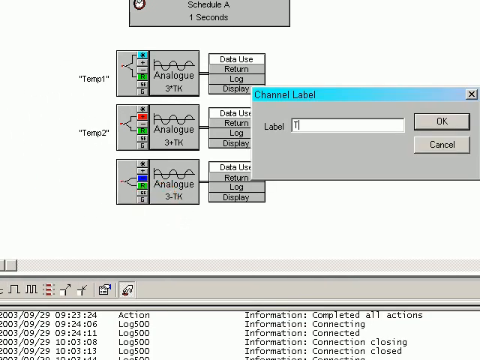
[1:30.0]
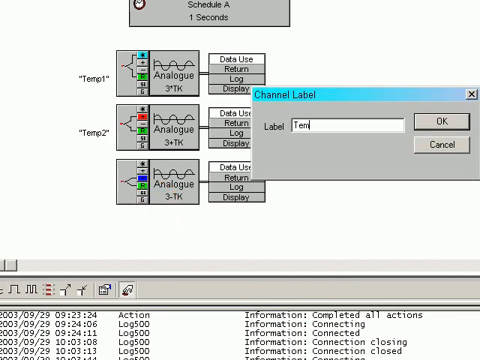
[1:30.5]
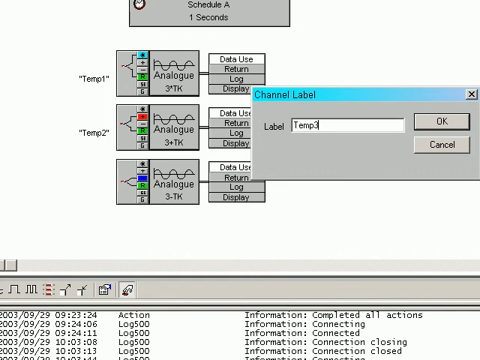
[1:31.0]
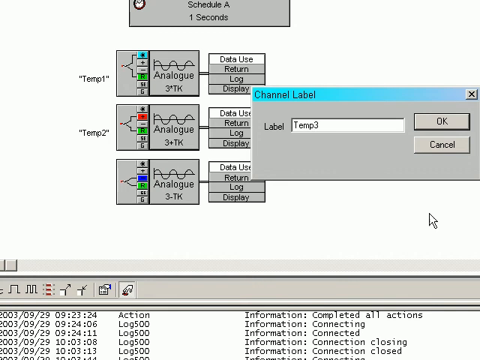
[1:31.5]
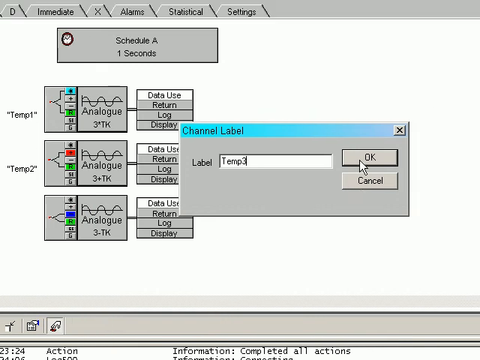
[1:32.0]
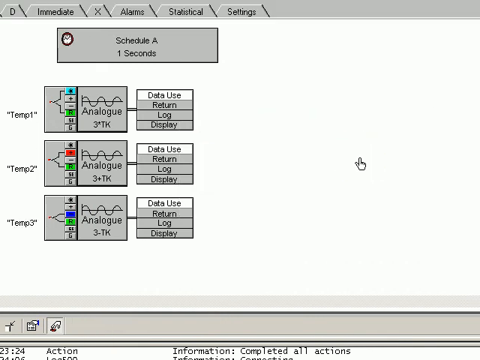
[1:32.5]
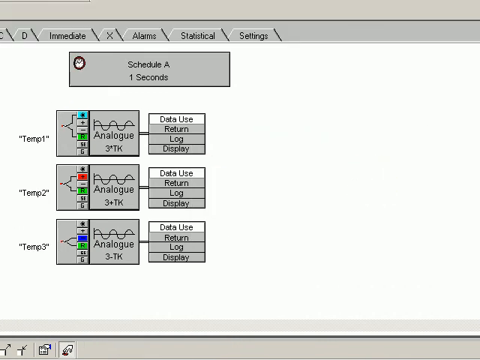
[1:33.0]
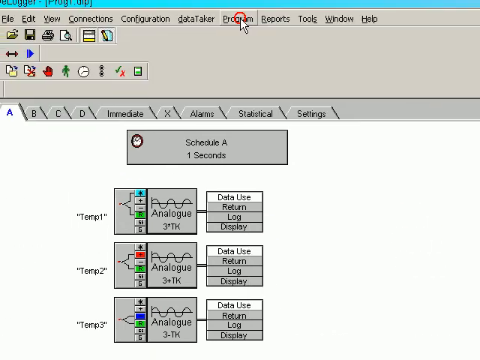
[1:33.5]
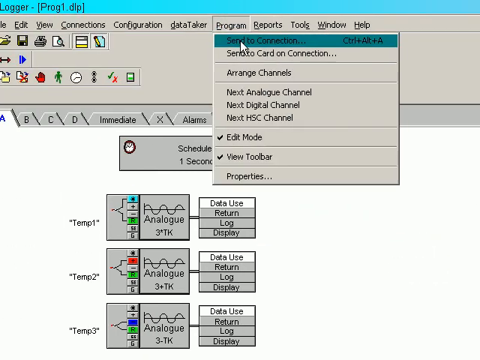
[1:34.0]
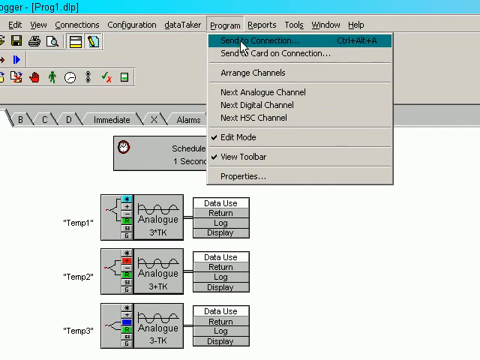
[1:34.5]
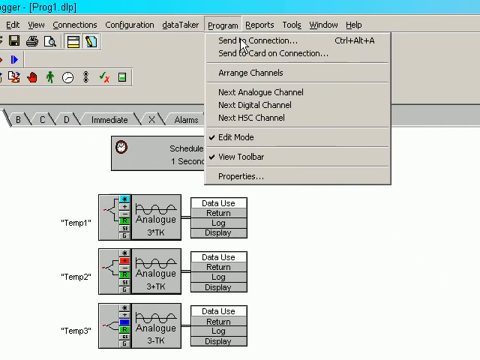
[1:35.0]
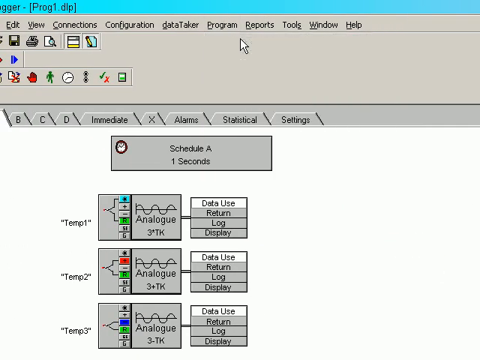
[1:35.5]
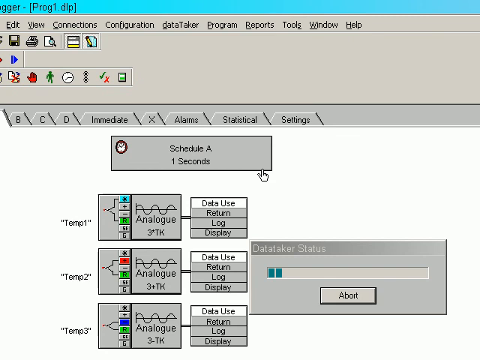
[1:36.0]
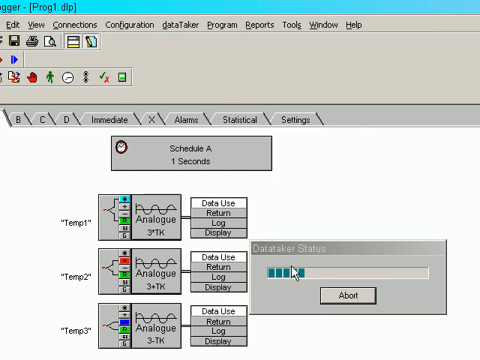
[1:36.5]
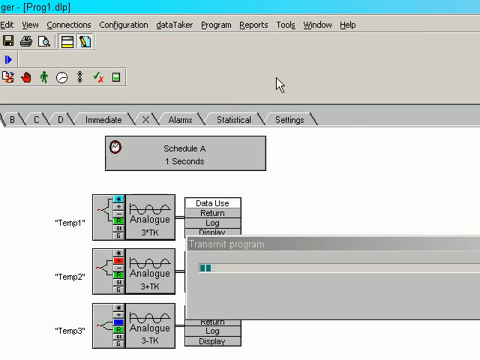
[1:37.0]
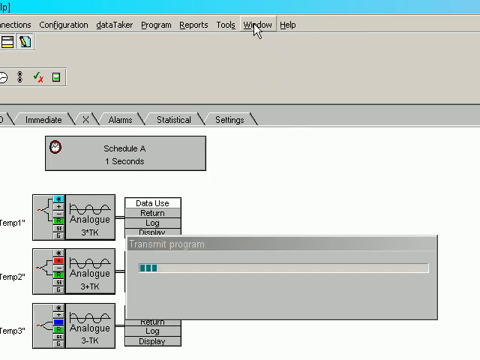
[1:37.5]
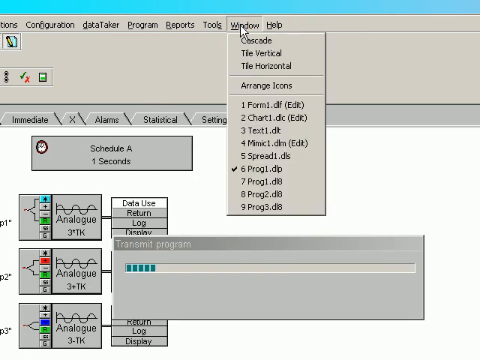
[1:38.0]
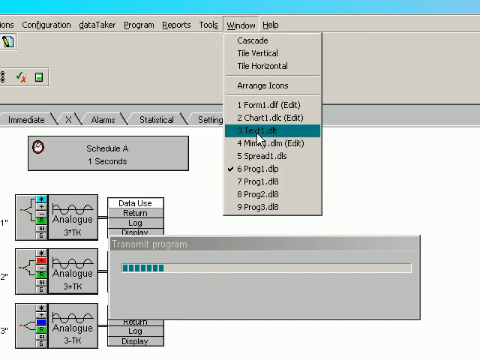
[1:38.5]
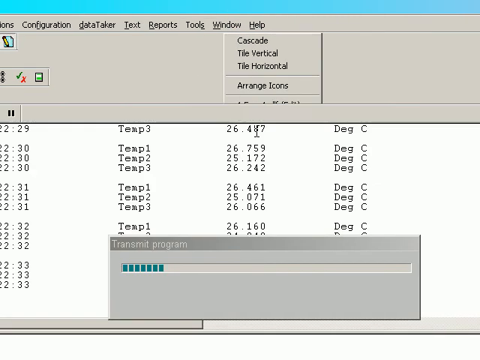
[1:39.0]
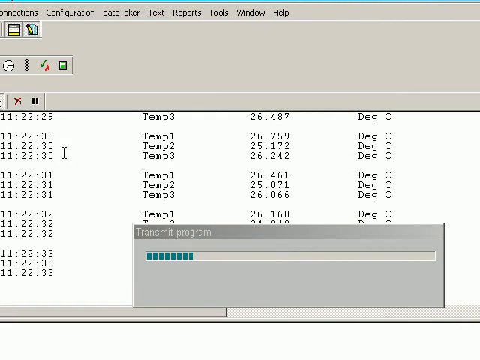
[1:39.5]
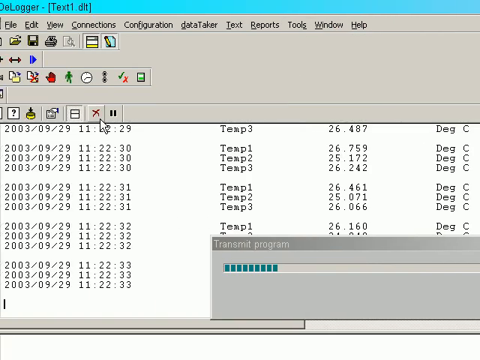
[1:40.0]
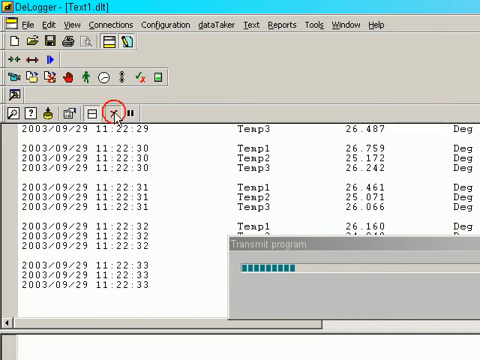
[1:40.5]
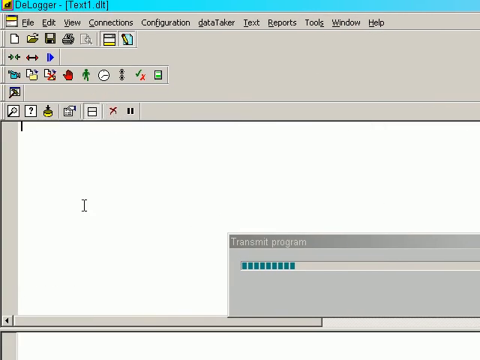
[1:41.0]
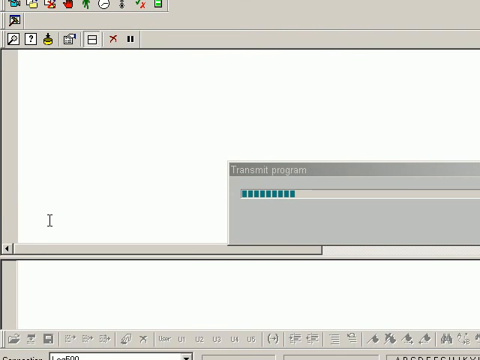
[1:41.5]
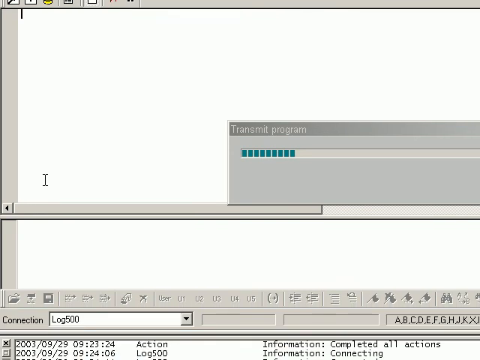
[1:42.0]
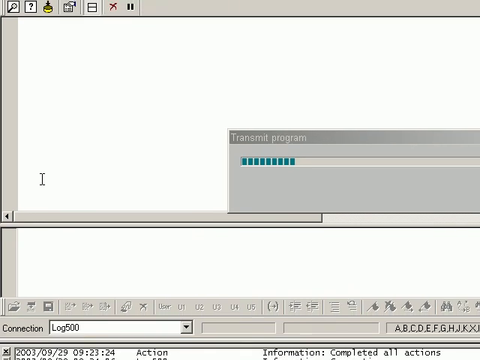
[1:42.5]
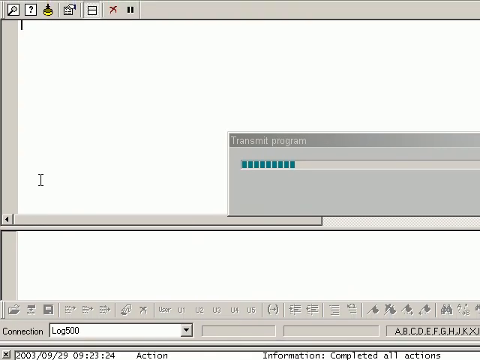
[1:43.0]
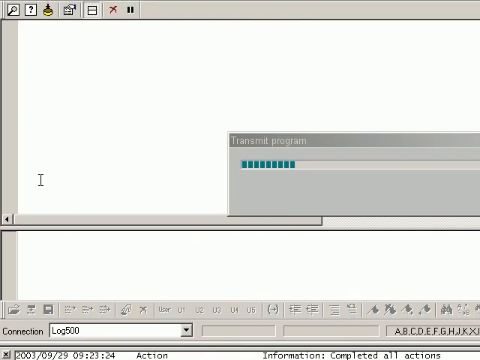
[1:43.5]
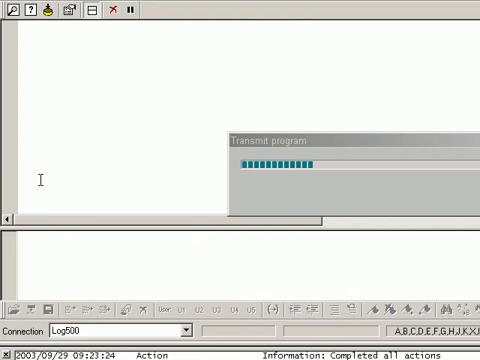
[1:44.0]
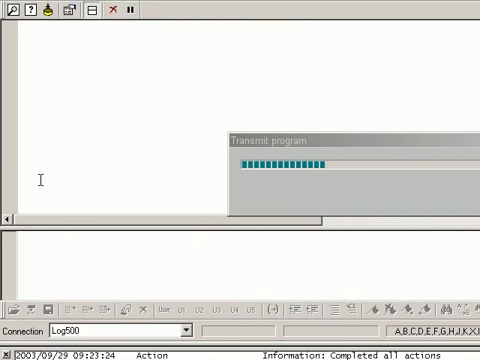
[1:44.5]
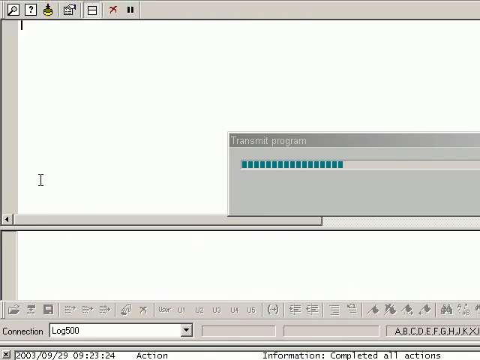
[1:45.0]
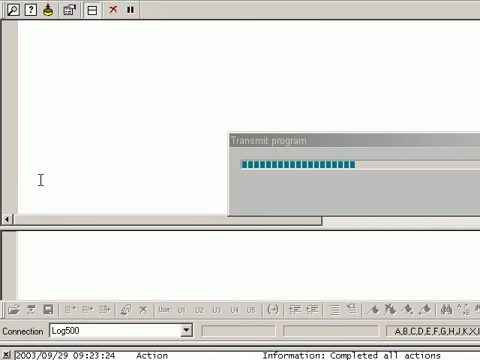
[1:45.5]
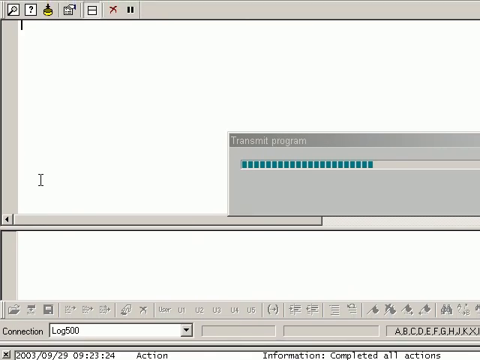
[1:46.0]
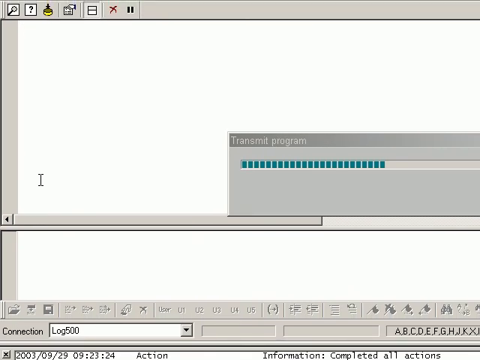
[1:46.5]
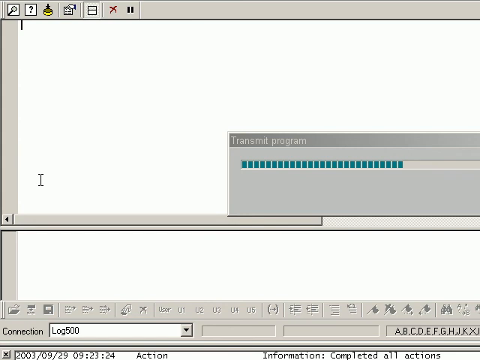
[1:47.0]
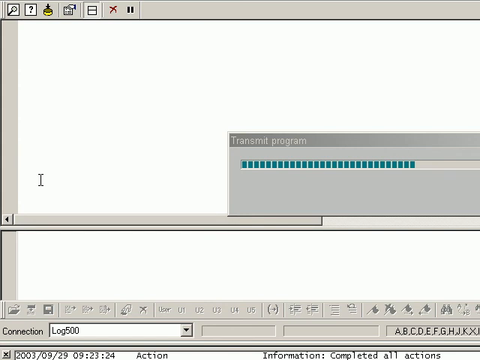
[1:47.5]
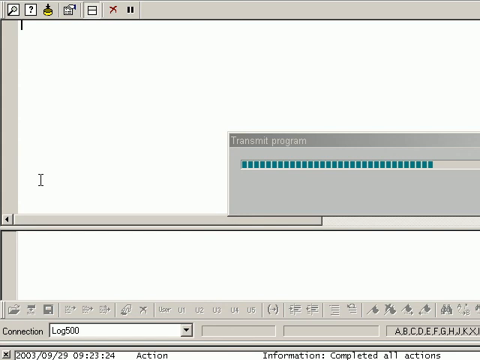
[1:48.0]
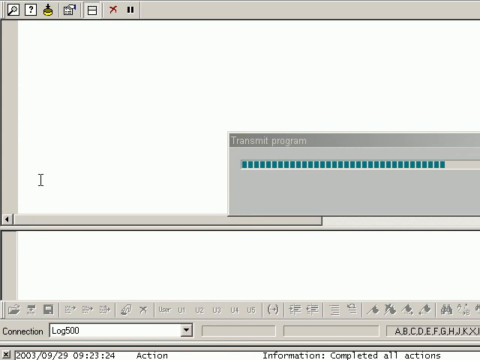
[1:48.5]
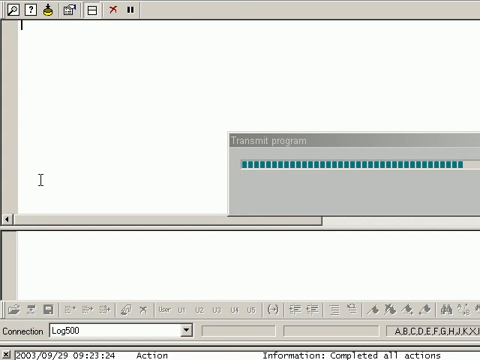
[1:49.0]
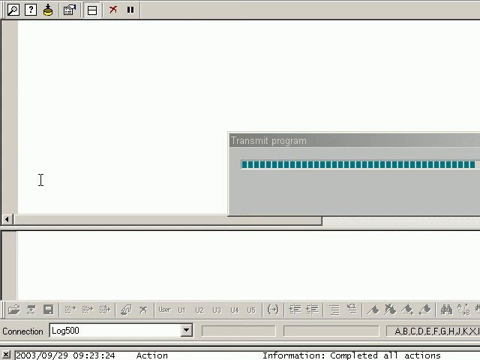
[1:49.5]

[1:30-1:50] He labels the third schematic as "temp 3", so all three schematics now have labels. He goes to programs on the top navigation bar and clicks send to connection. A brief pop-up says "data taker status" with a loading bar and goes by very quickly, followed by another pop-up with a loading bar that says "transmit program". Window on the navigation bar is clicked, with a red circle around the mouse as it clicks, and from its drop-down menu "three text one.dlt" is clicked. A table full of numbers appears: the left column shows the date, 2003 September 29th, 11:22, and the second column shows the labels temp 1, temp 2 and temp 3. One of the tool buttons, the X, is clicked, deleting all of the tables. The transmit program loading bar is still loading, about 80 percent full.